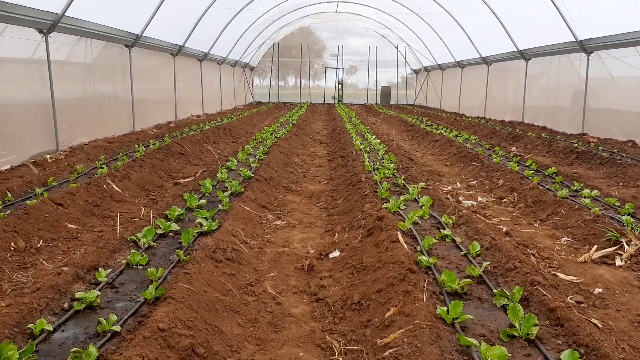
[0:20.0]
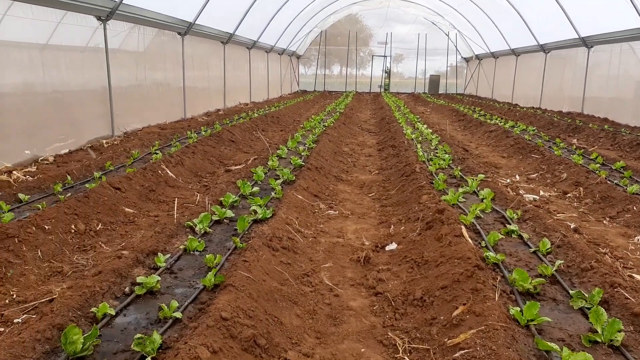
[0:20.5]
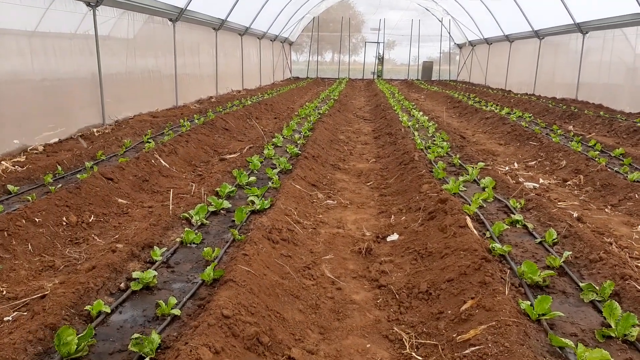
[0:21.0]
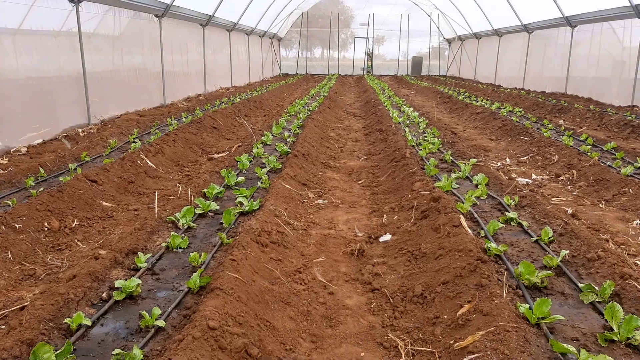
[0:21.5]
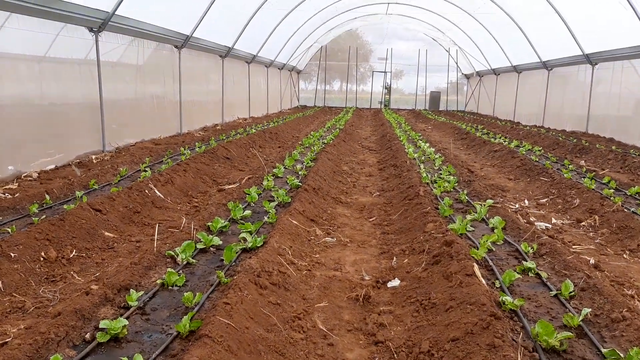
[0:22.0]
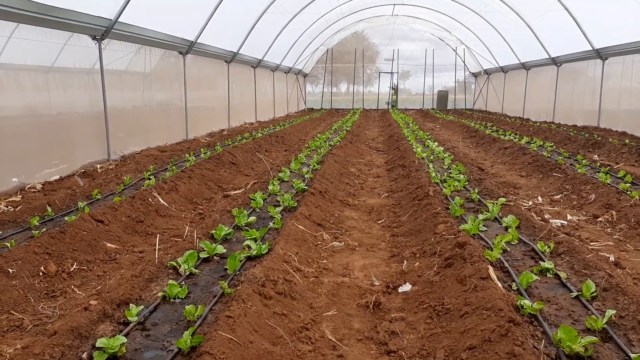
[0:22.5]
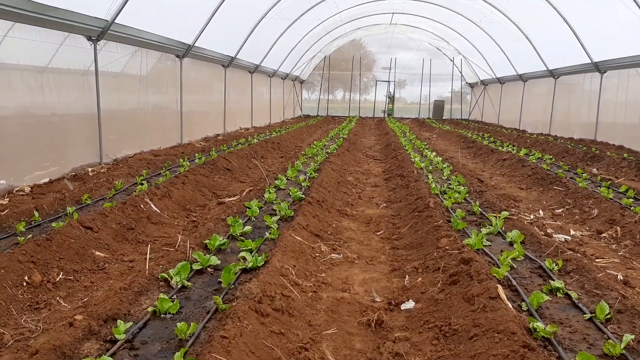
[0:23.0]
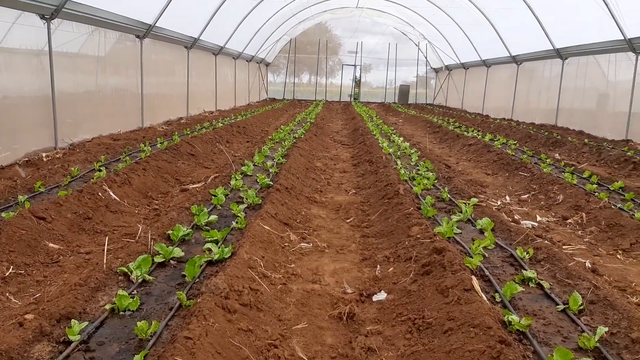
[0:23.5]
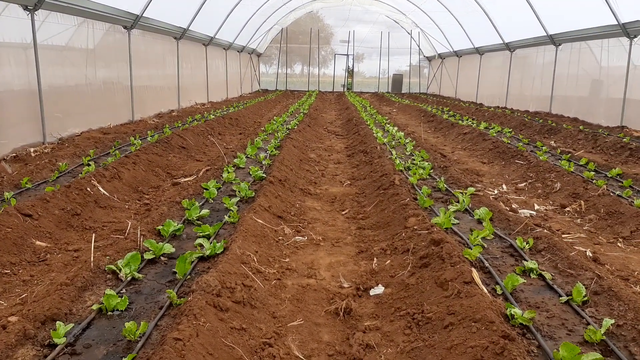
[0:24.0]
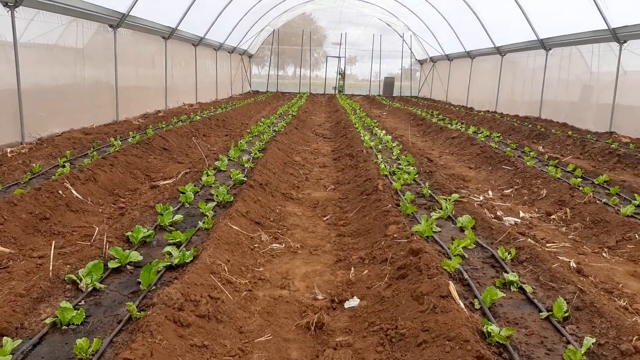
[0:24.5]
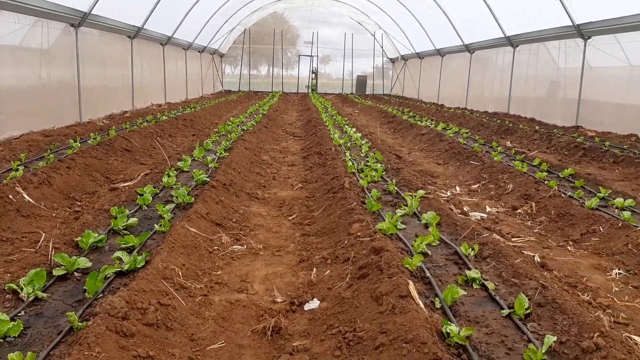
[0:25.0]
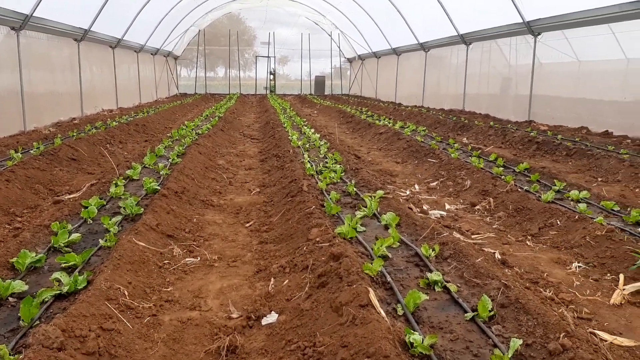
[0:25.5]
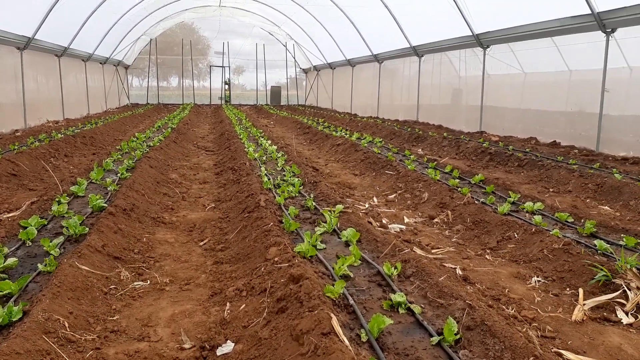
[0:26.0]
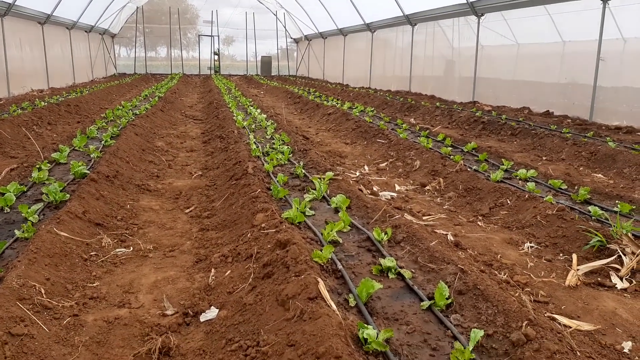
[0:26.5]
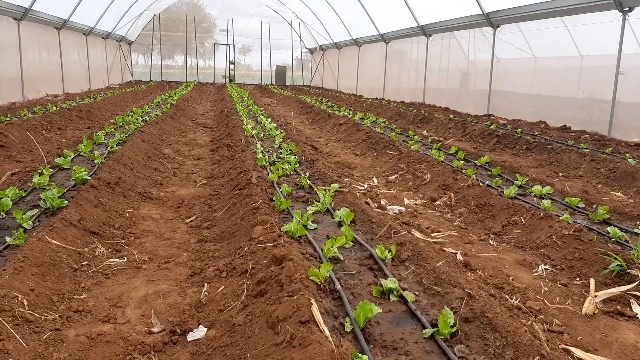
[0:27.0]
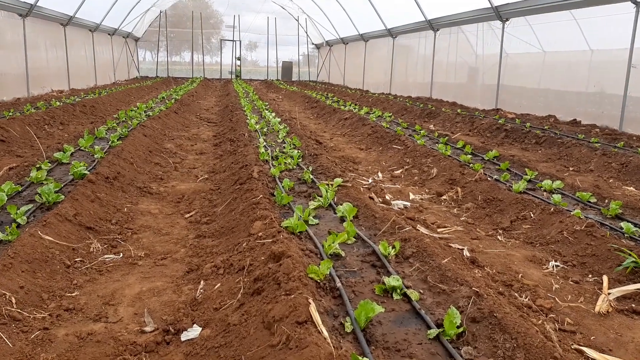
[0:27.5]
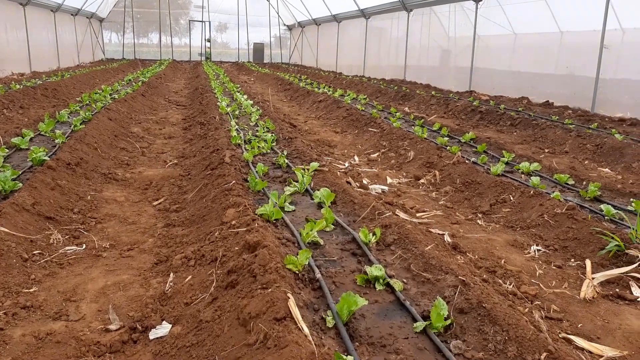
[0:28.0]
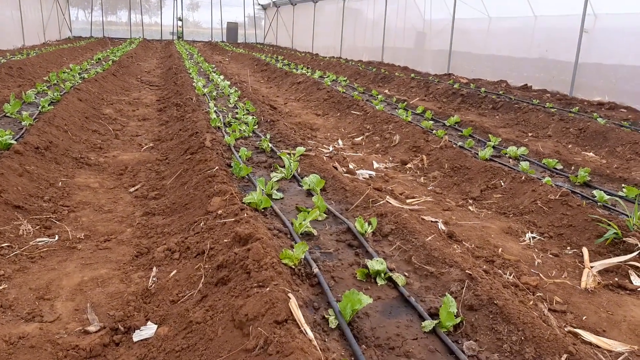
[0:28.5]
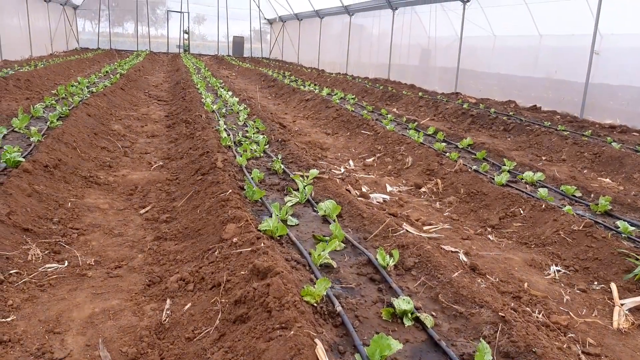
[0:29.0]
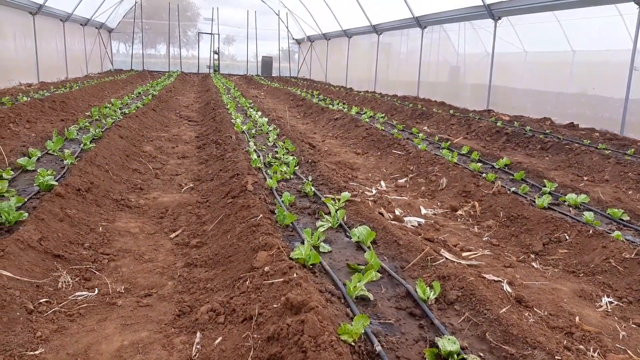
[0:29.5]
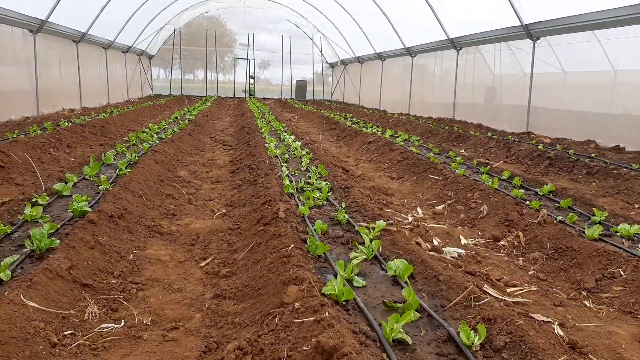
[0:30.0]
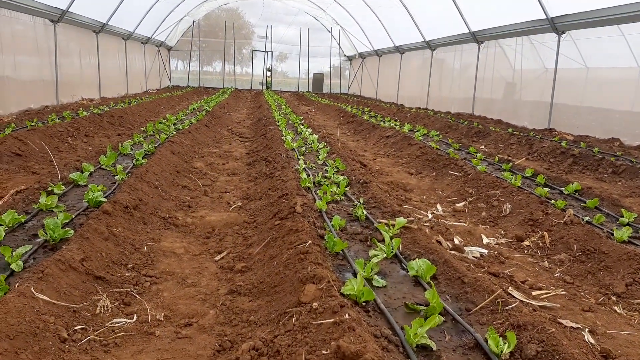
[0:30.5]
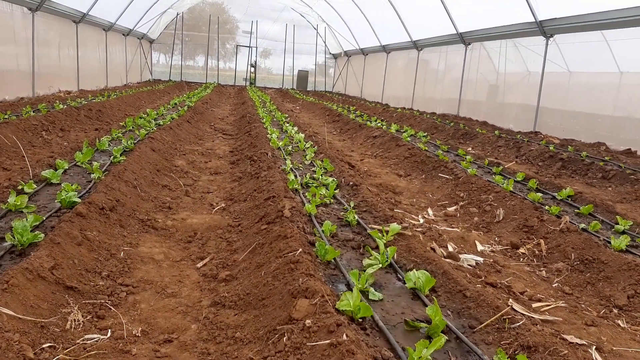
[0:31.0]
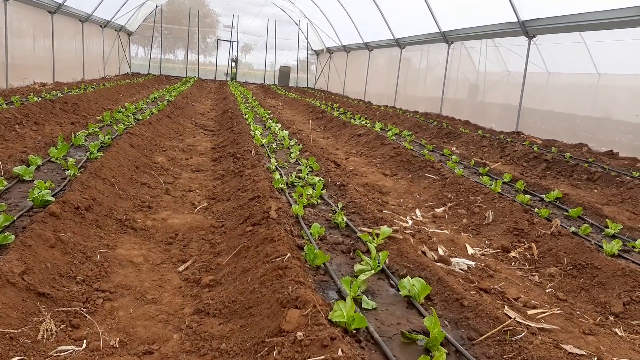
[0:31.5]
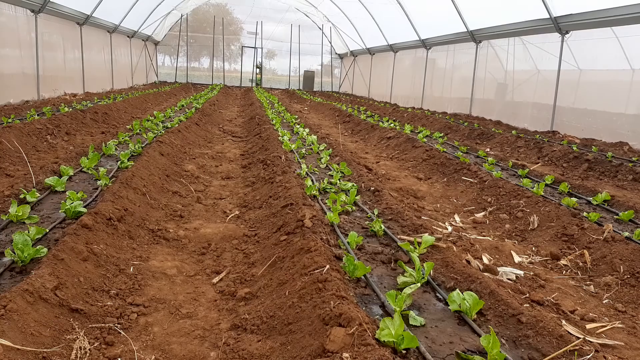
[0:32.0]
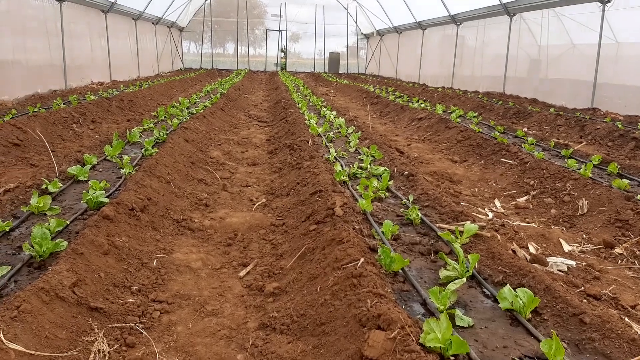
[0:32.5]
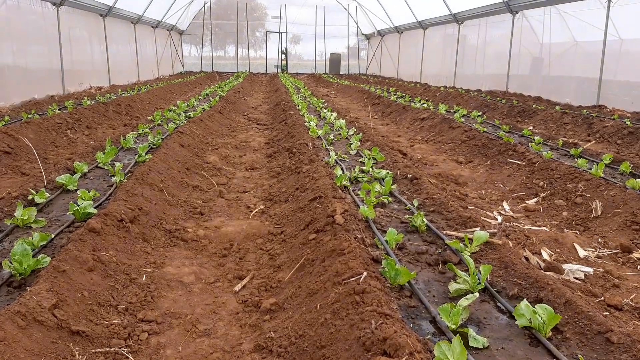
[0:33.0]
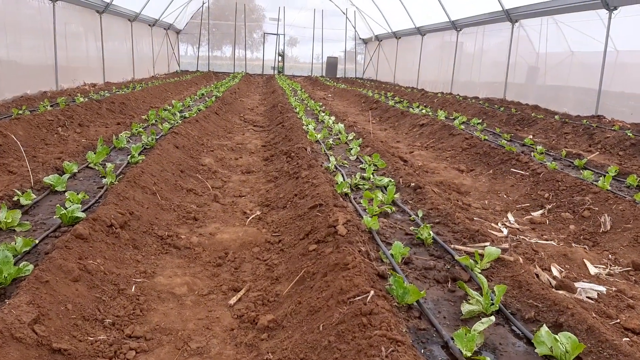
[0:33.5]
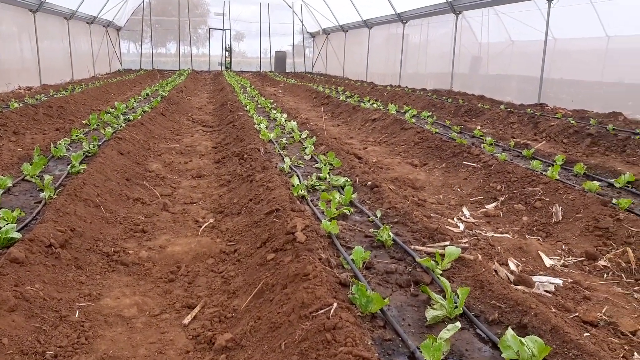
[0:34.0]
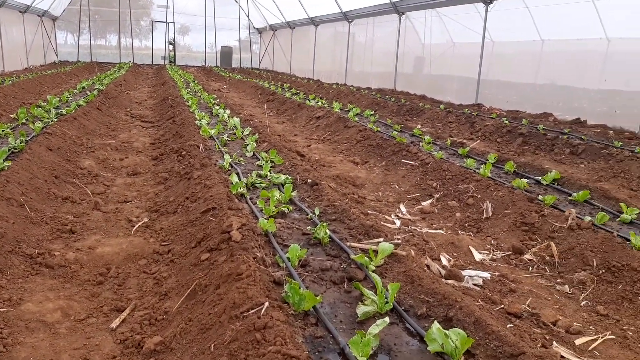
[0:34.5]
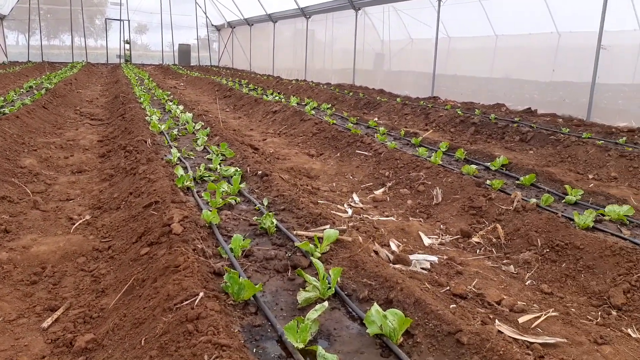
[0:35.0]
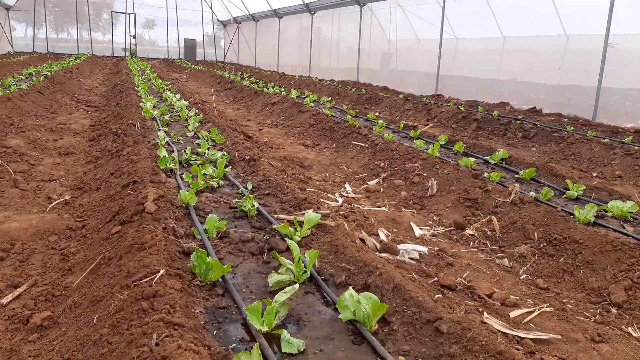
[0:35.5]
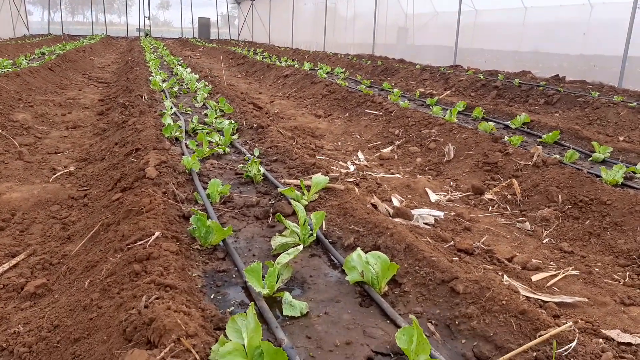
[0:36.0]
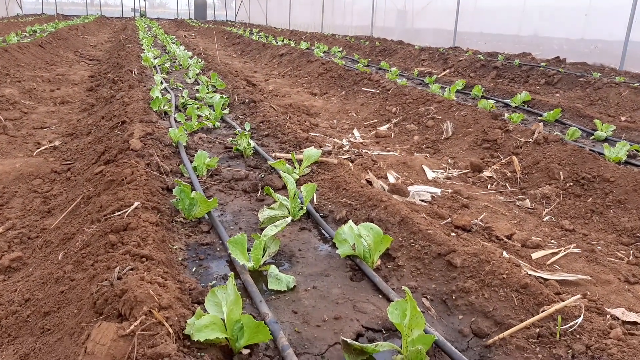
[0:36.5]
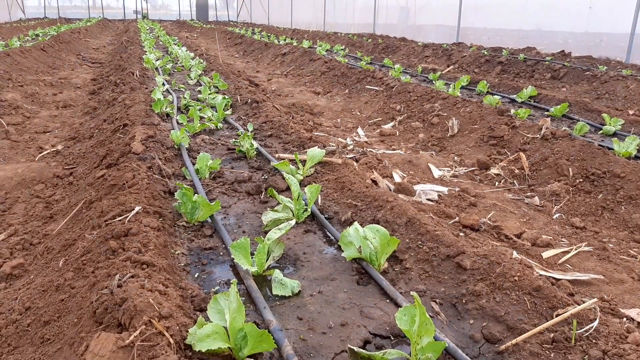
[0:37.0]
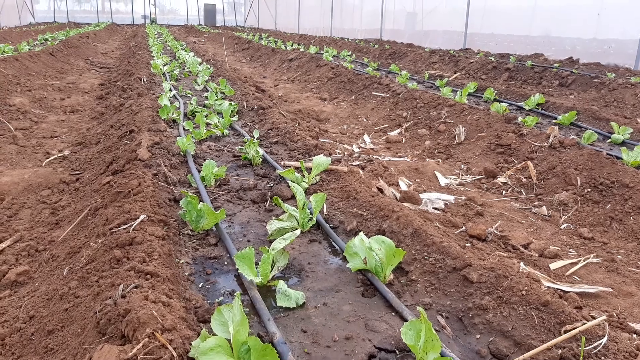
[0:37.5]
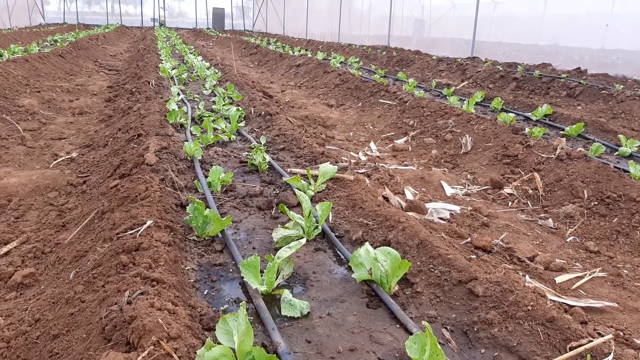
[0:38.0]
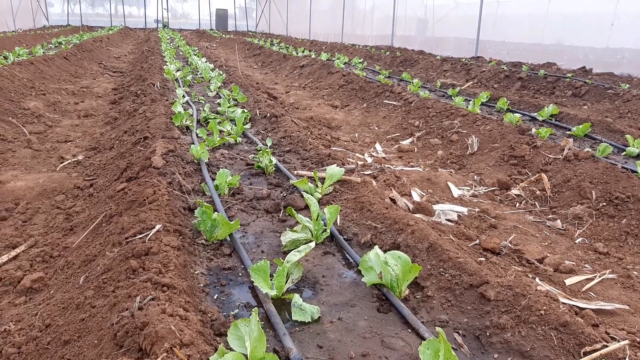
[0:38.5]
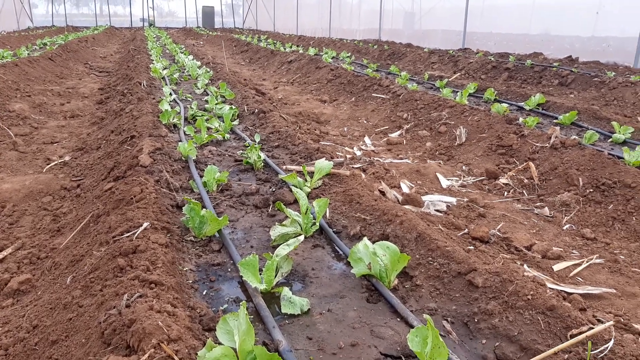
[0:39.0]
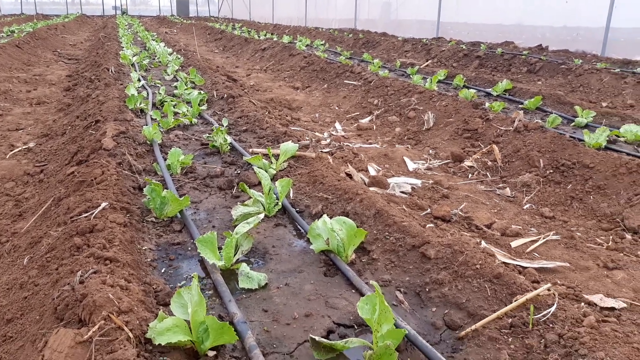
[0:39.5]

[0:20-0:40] Inside a greenhouse, the view is from someone slowly walking from one end of the greenhouse toward the other. It is daytime, on a dreary rather than bright, sunny day. Four rows of plants run the length of the greenhouse. The plants are tiny, no bigger than four inches each, and have no labels. Black plastic lining, the kind put down to prevent weeds, is visible underneath the rows of plants. Beds of dark brown dirt lie between the four rows of plants. There are no other people or animals in view. The plants in all rows appear to be the same plant, matching in appearance, size and leaf style. A door is visible at the far end of the nursery, and the cameraman appears to be walking toward it.